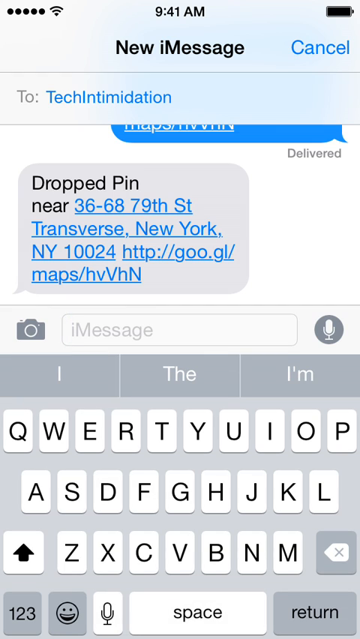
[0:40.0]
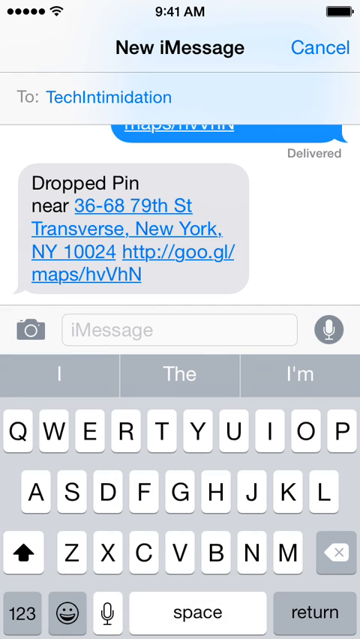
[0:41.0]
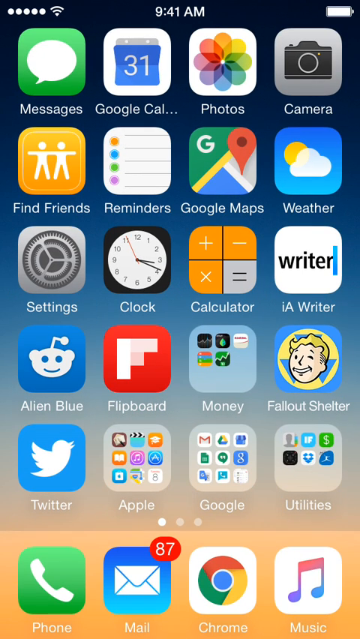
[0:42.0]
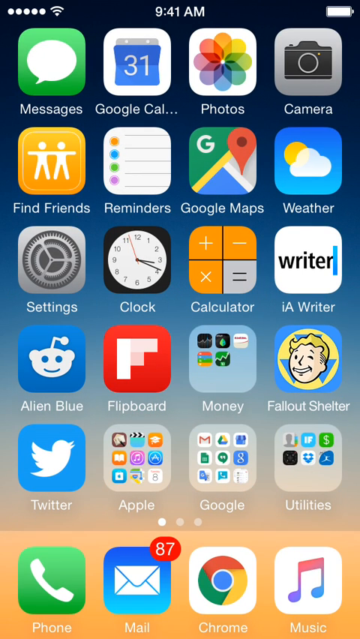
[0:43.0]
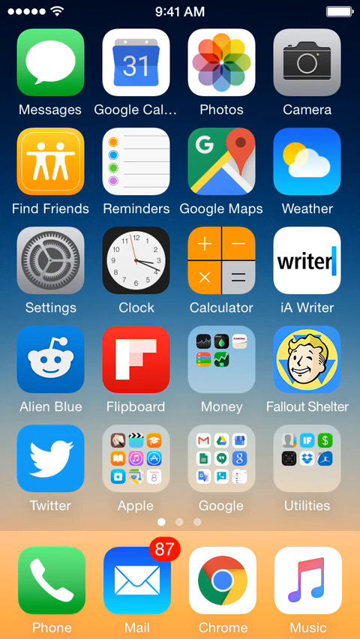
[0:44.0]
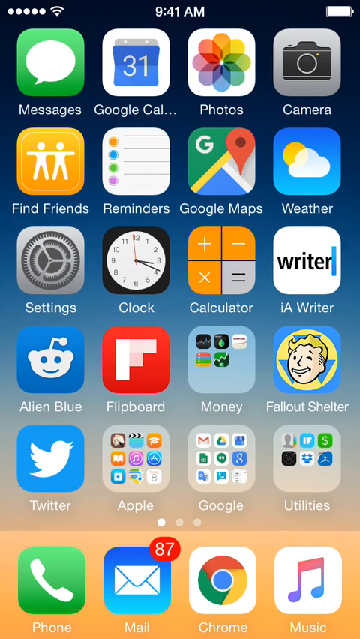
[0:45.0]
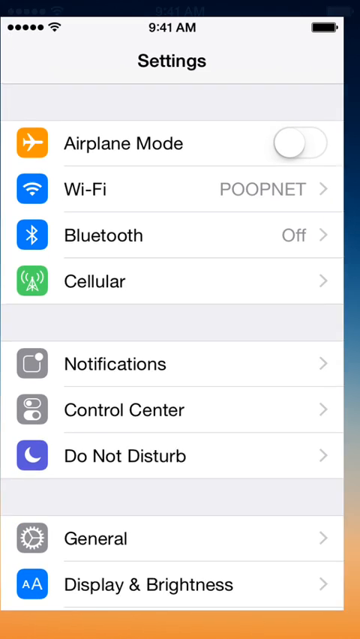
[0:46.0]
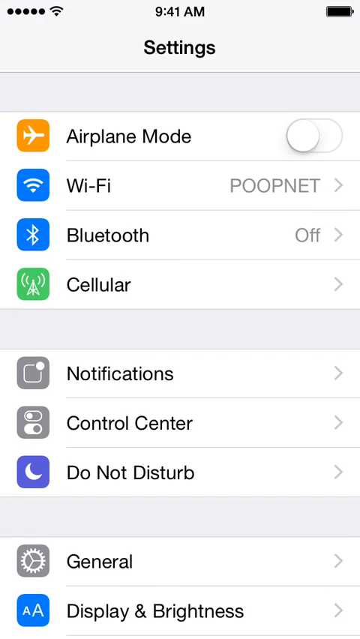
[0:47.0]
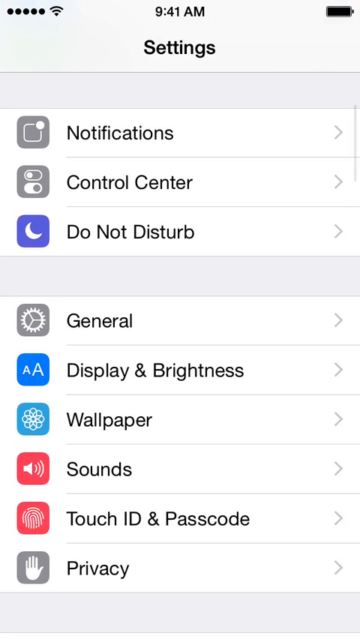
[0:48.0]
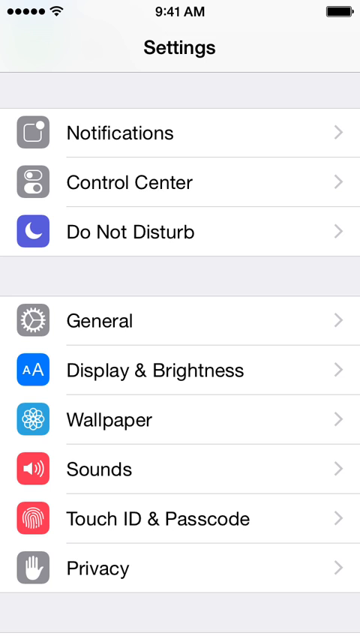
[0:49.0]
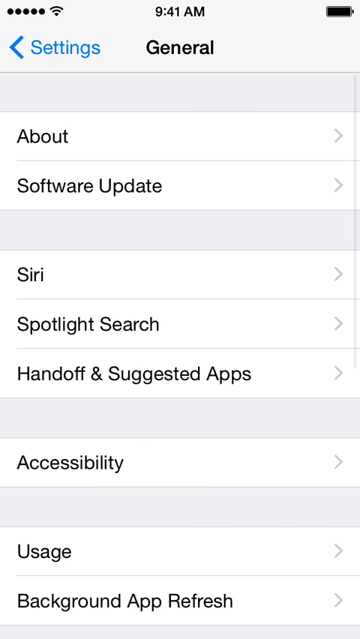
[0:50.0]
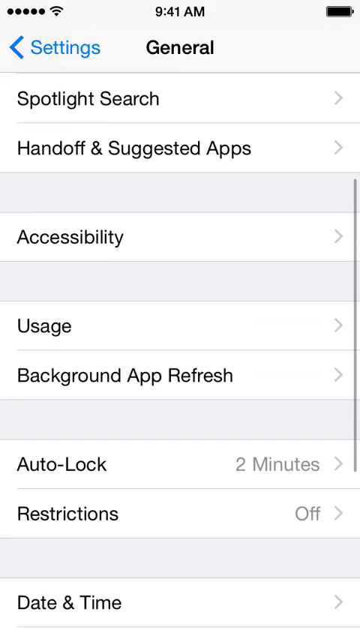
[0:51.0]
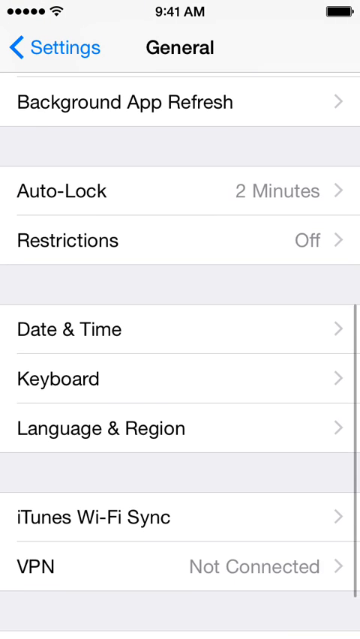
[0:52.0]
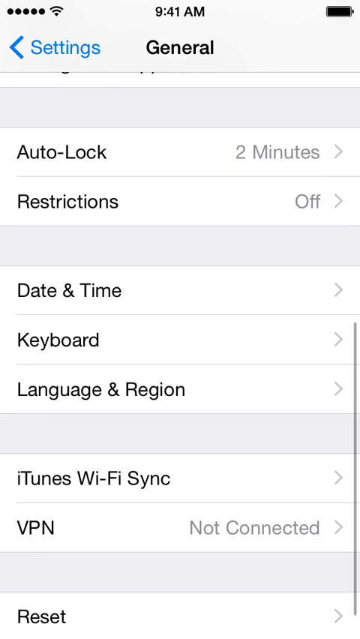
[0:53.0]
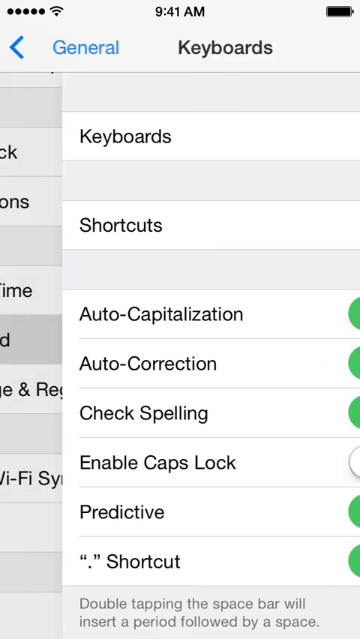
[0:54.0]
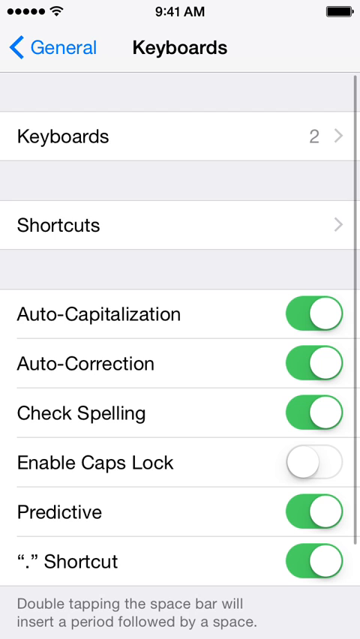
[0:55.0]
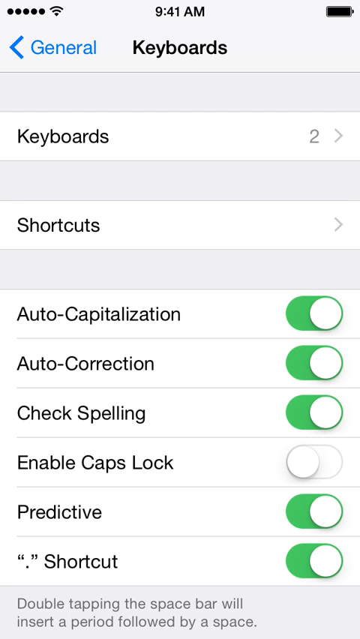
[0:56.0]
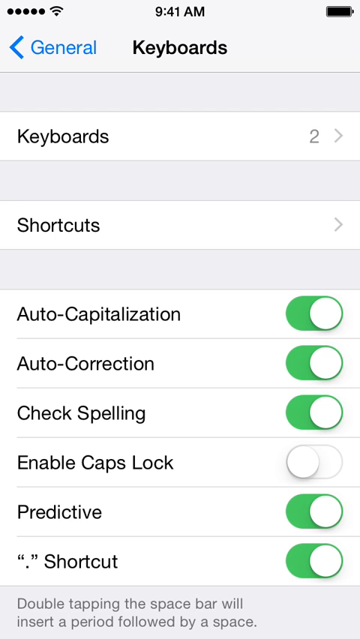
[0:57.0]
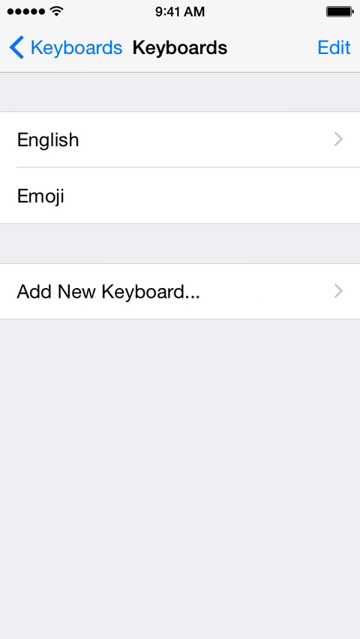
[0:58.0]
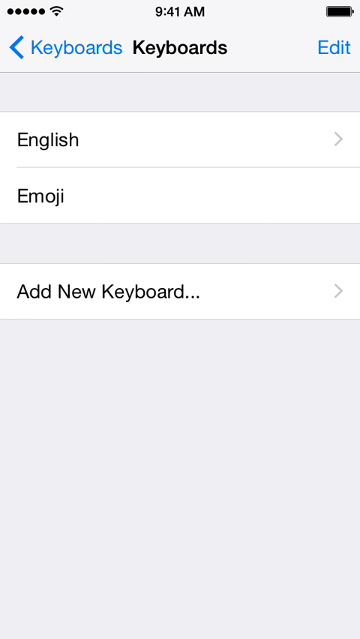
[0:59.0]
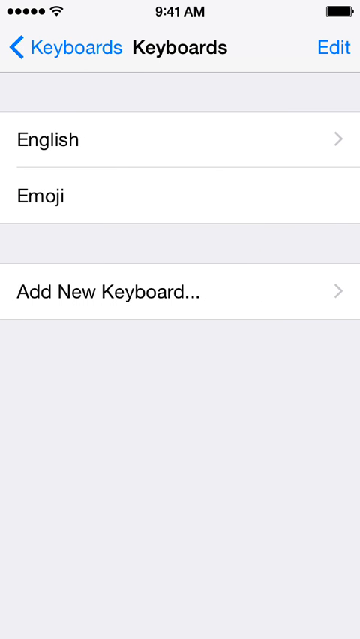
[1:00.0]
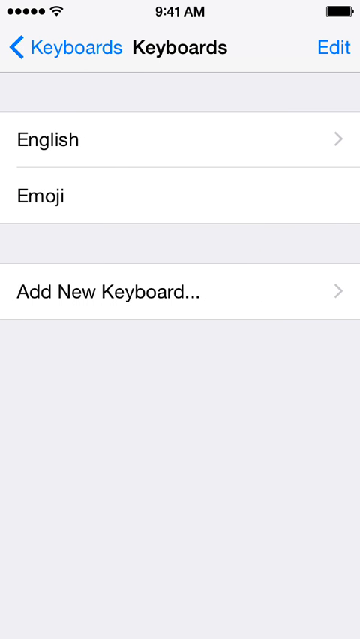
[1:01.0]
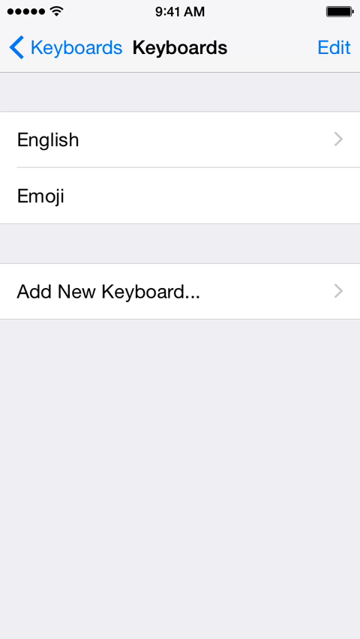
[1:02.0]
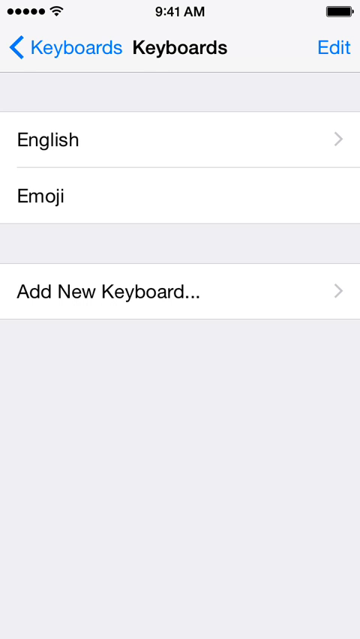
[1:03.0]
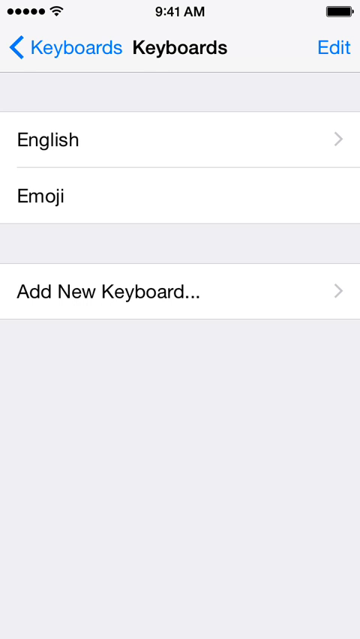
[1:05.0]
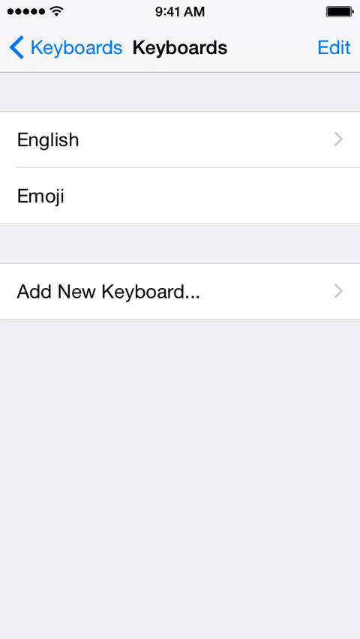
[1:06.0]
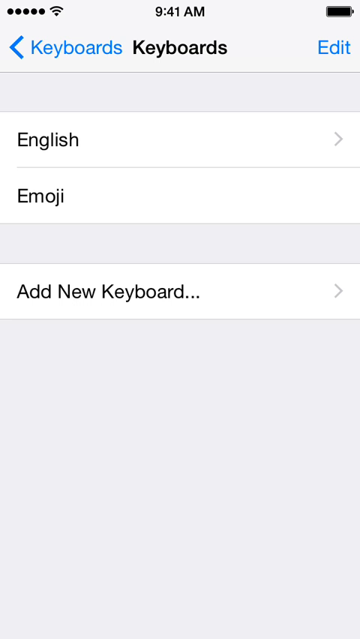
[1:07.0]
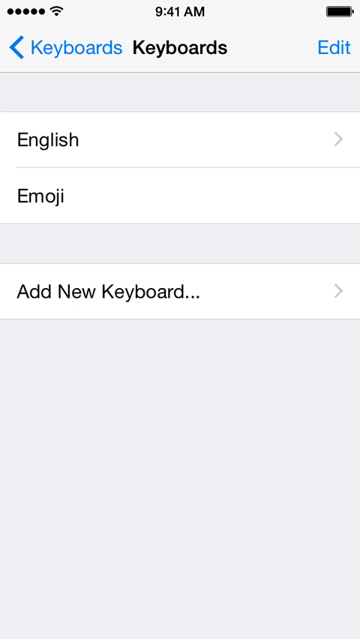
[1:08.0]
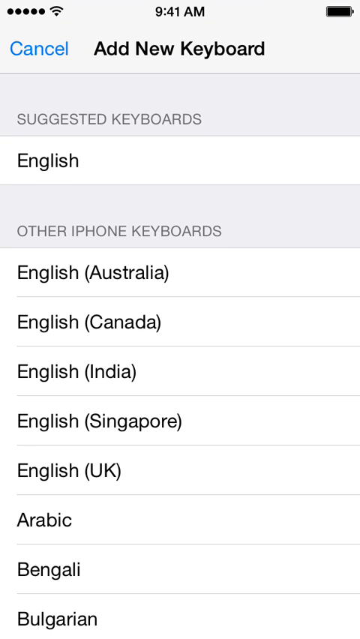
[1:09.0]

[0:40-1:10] The user leaves messages, returns to the main screen, and opens Settings. They scroll down and tap General, scroll to the bottom of General, and select the Keyboard option. The keyboard settings show two keyboards for this user and a shortcut option. Auto-capitalization, auto-correction and check spelling are on, caps lock is off, predictive is on, and shortcut is on. The user taps Keyboards, which lists an English keyboard, an emoji keyboard, and the option to add a new keyboard. They select add a new keyboard, and a list of suggested keyboards appears: English for Australia, English for Canada, English for India, English for Singapore and English for the UK, followed by Arabic, and finally Bengali, the last one visible on this screen.